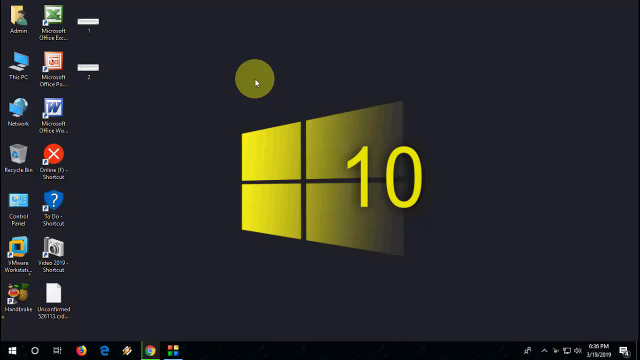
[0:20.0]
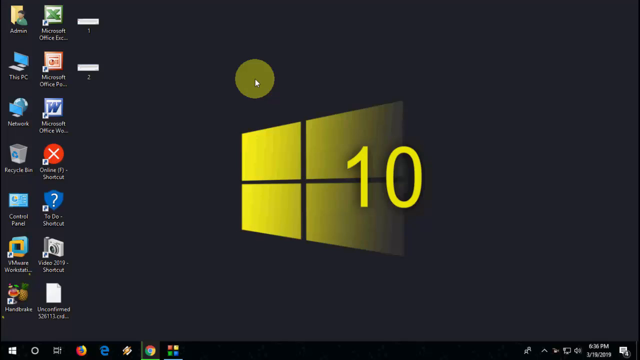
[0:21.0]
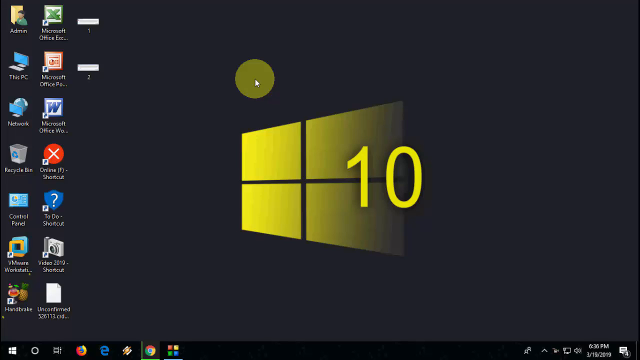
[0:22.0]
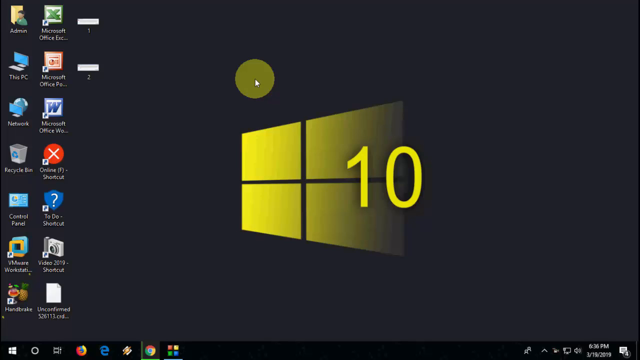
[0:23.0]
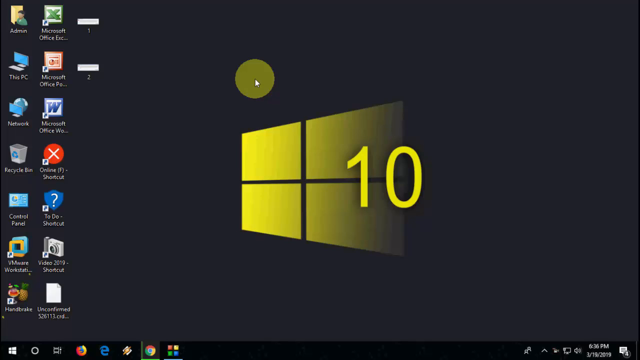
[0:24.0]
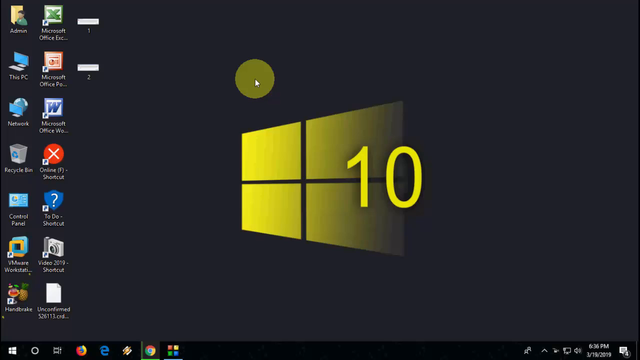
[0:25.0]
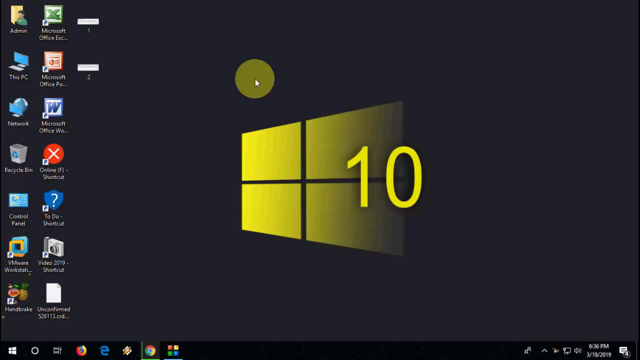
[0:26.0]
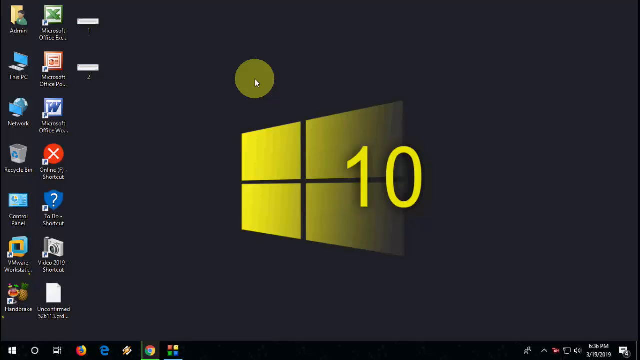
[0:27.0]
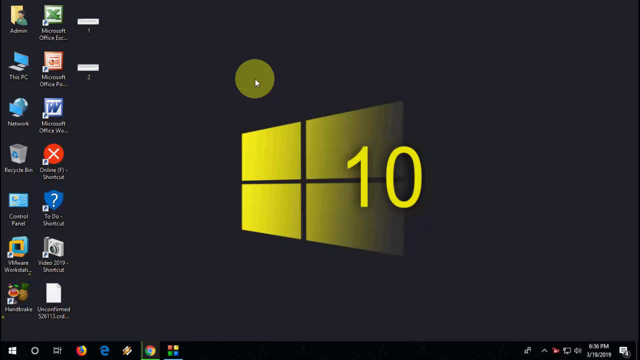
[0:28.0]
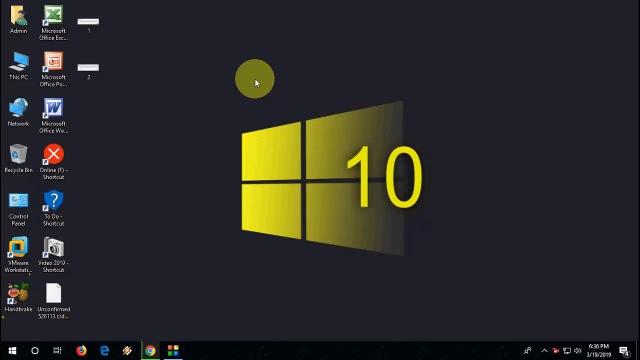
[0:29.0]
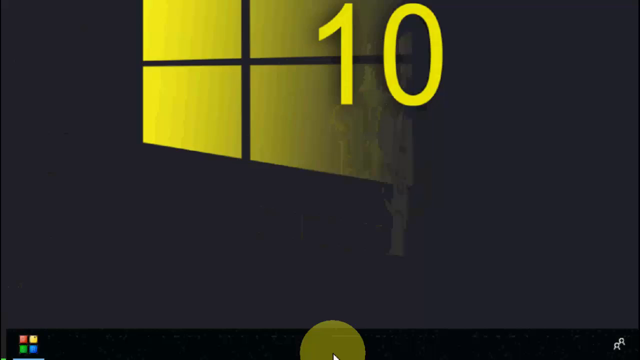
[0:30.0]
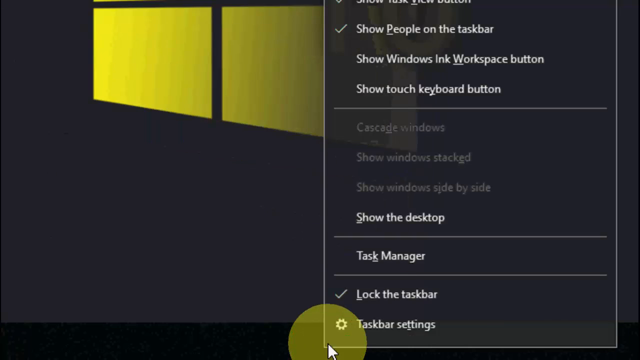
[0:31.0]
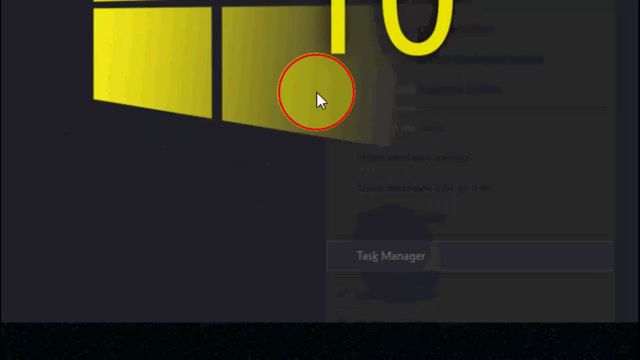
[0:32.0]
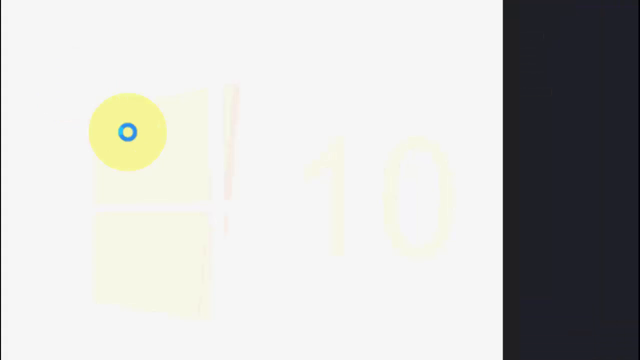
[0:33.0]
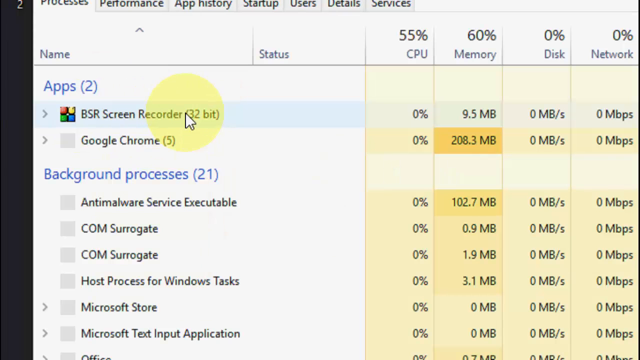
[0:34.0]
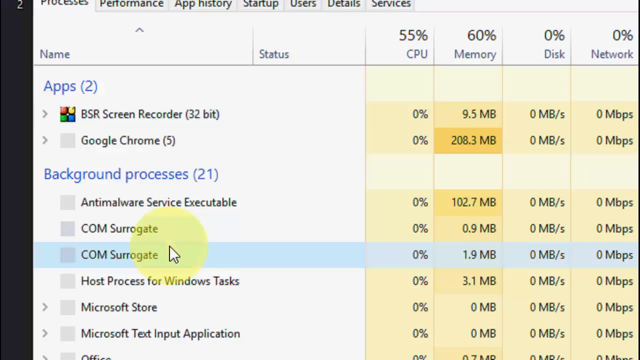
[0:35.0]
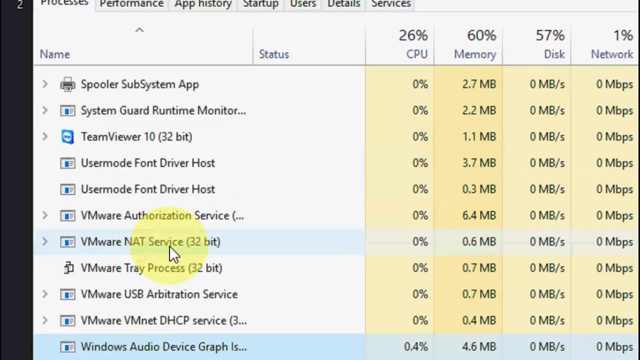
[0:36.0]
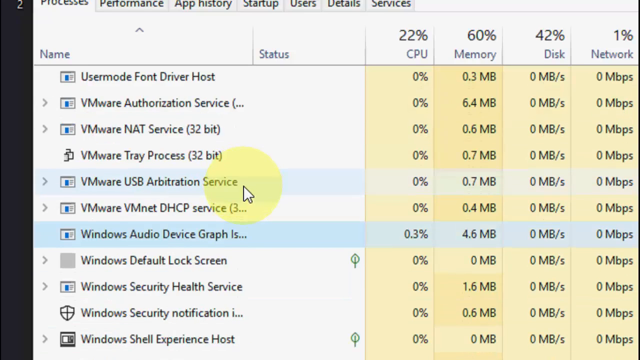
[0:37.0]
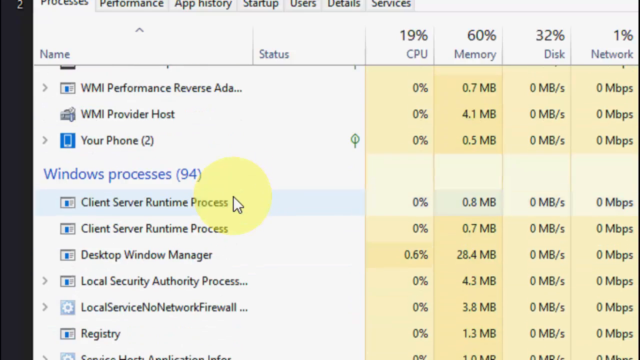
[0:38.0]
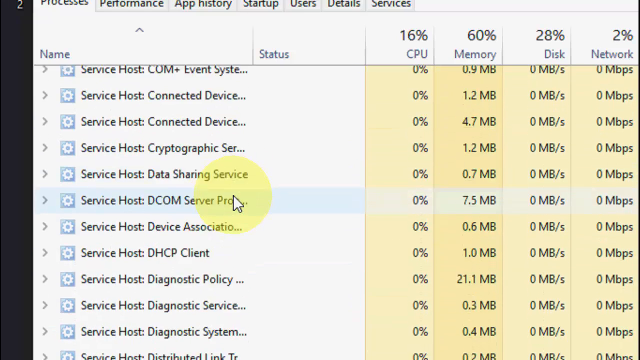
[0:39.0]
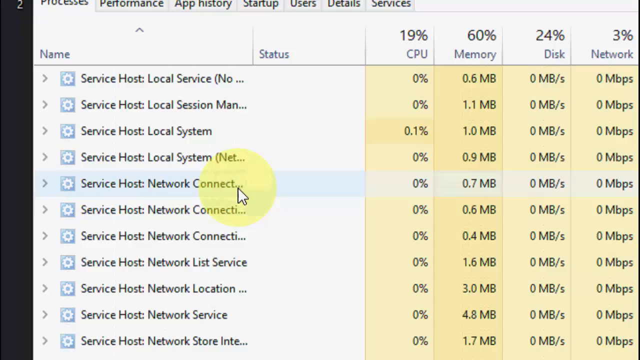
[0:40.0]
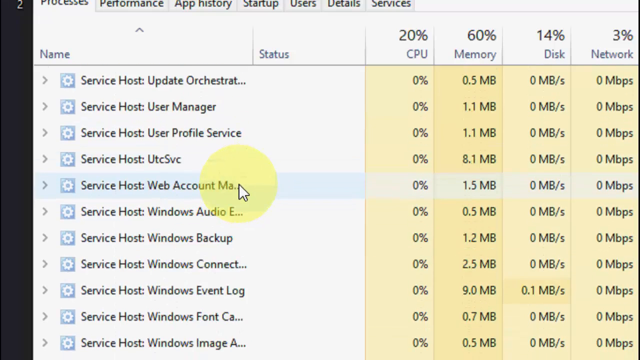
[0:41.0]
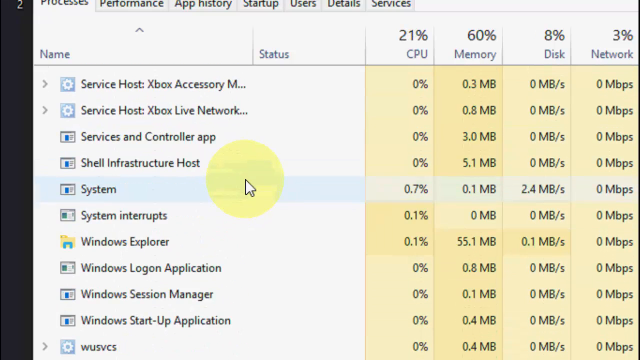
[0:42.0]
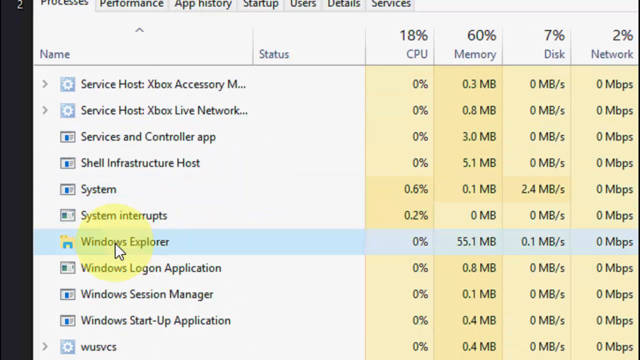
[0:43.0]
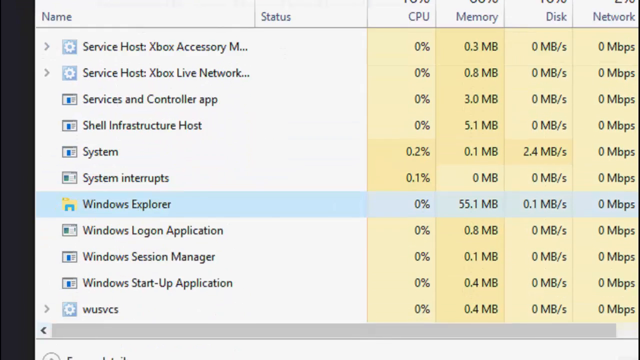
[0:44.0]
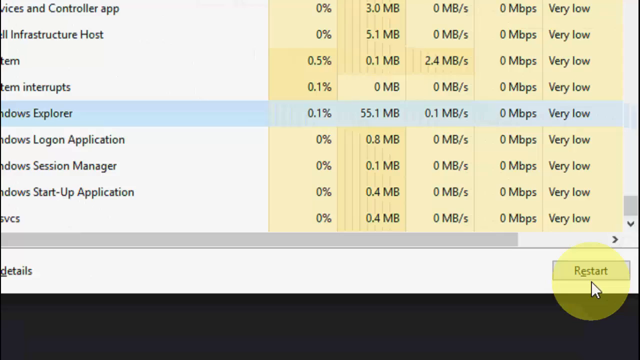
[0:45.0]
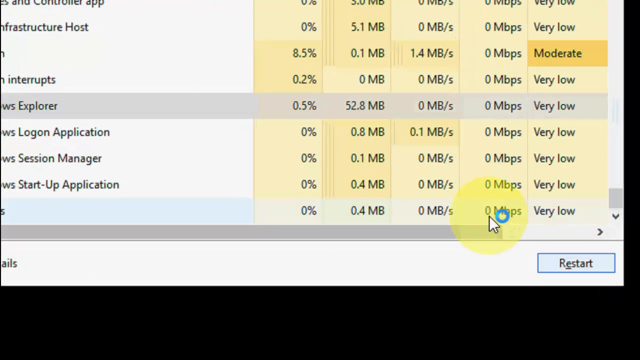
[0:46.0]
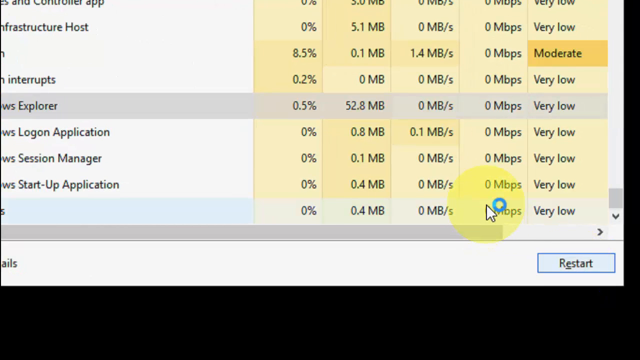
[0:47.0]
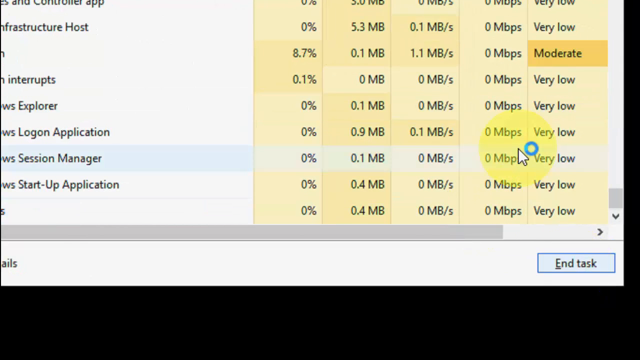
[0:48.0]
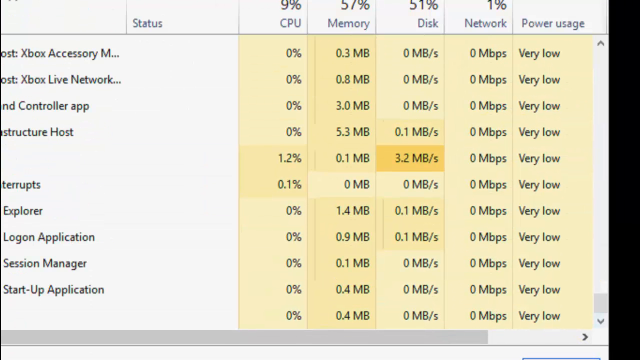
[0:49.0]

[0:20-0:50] A recording of someone's computer screen shows a desktop with two columns of seven icons each and a third column of just two images. The background is the Windows logo with a number 10 on it, tinted yellow. The mouse cursor, a typical white cursor surrounded by a yellow circle, is visible just above the Windows logo. The cursor moves down to the taskbar at the bottom of the screen, right-clicks it, and selects Task Manager from the context menu. Each click briefly shows a red circle. The screen flashes white and a new window labeled "Task Manager" pops up, listing the various processes on the Windows operating system along with CPU, memory, disk, and network usage in percentages. The user scrolls down the list, finds Windows Explorer, and clicks on it.